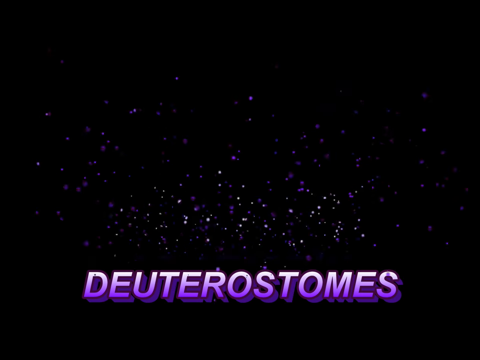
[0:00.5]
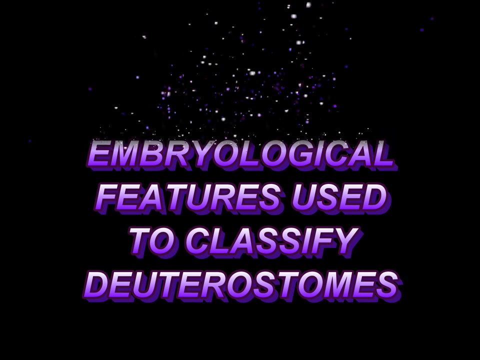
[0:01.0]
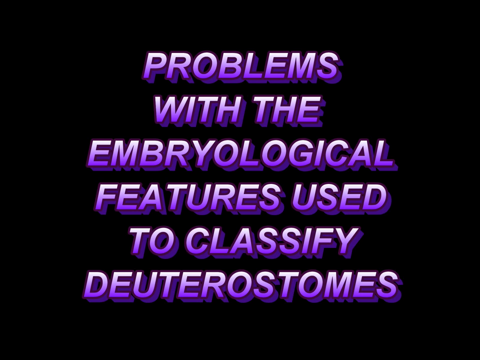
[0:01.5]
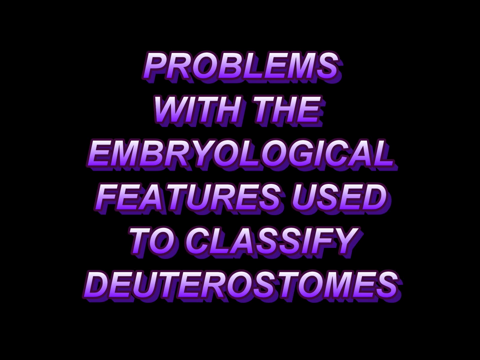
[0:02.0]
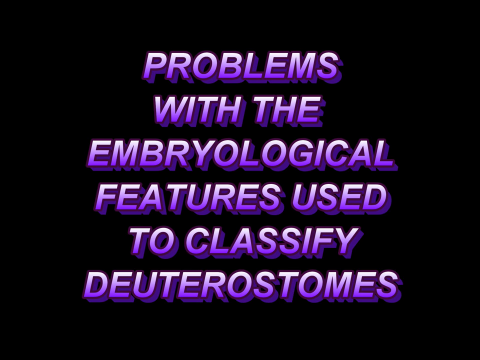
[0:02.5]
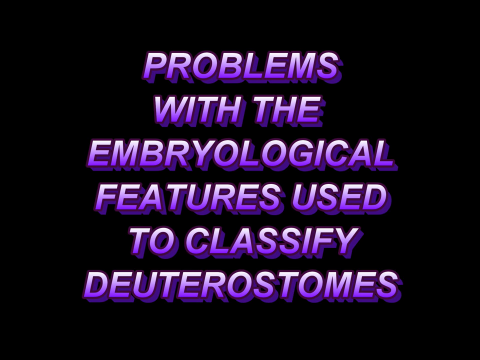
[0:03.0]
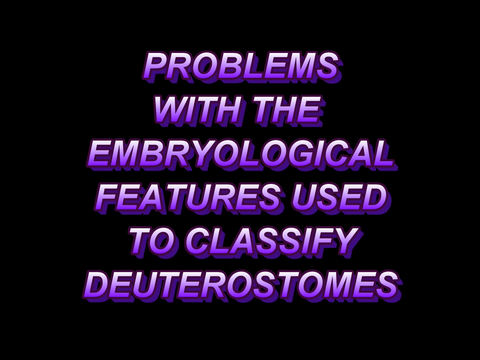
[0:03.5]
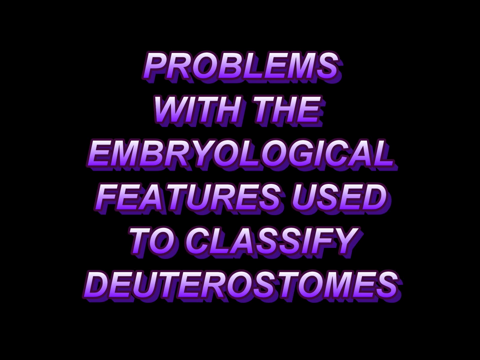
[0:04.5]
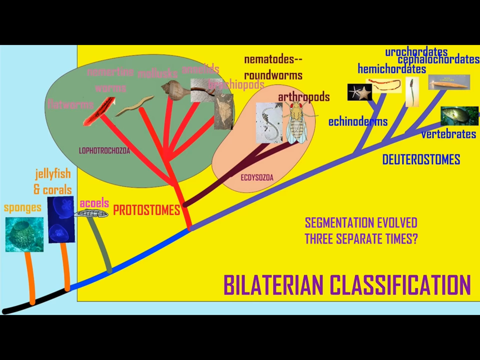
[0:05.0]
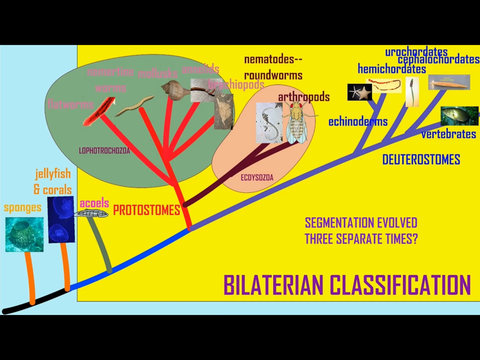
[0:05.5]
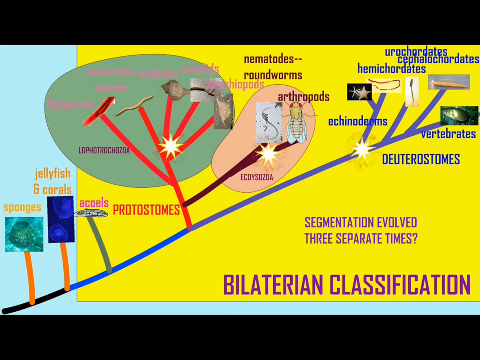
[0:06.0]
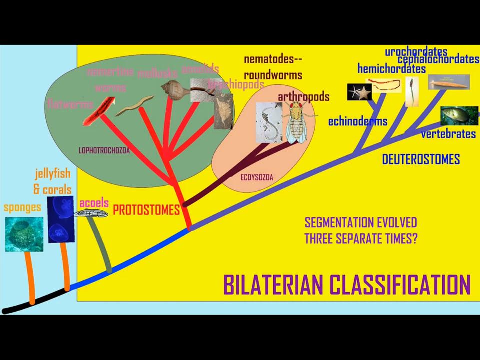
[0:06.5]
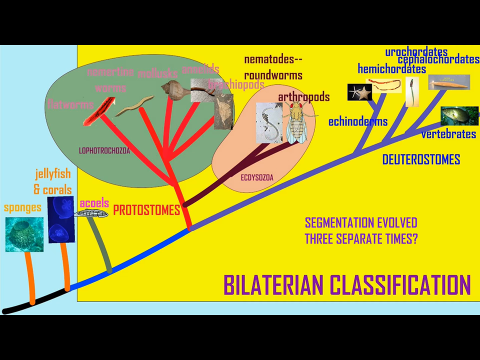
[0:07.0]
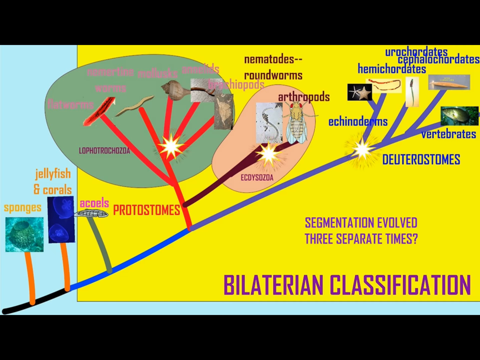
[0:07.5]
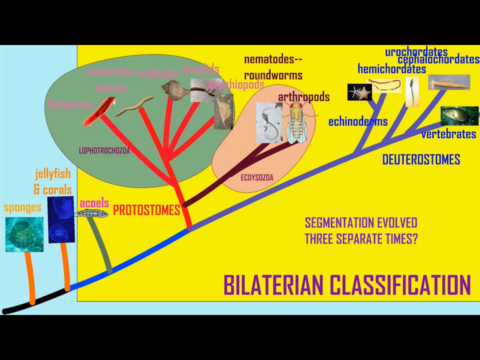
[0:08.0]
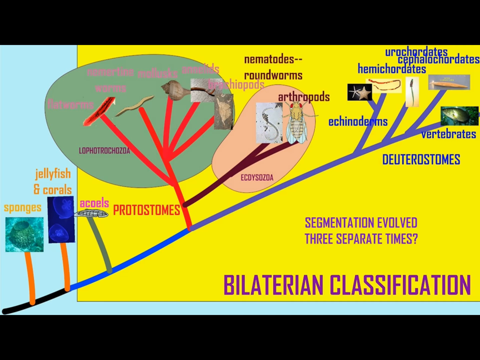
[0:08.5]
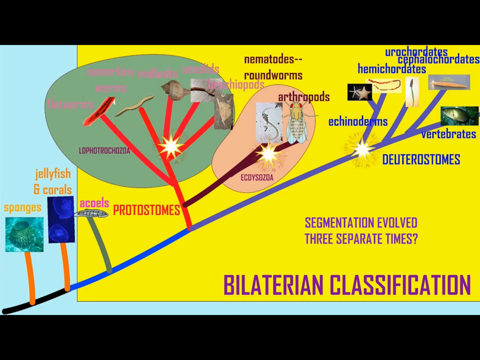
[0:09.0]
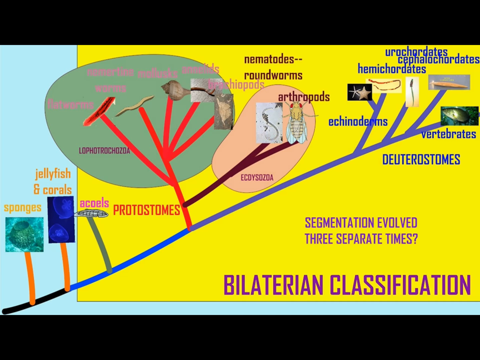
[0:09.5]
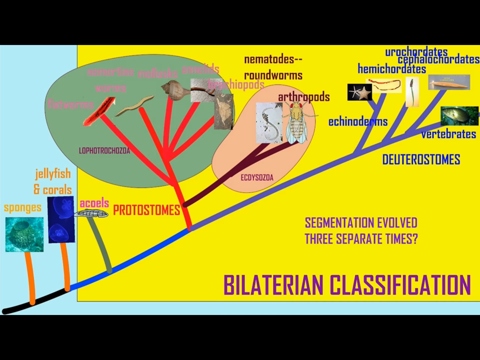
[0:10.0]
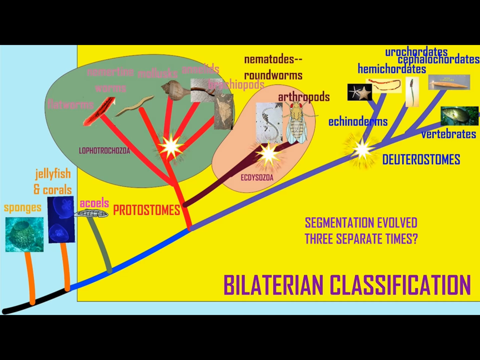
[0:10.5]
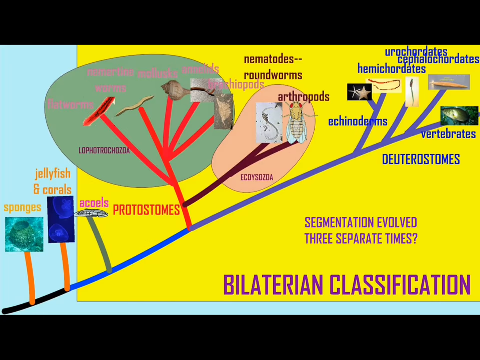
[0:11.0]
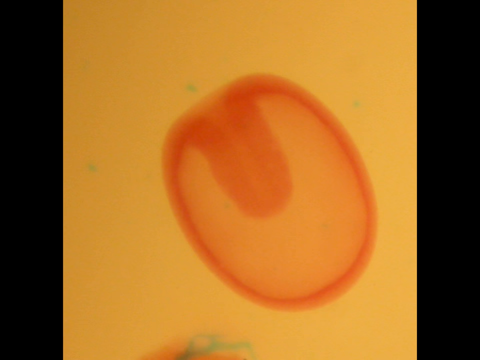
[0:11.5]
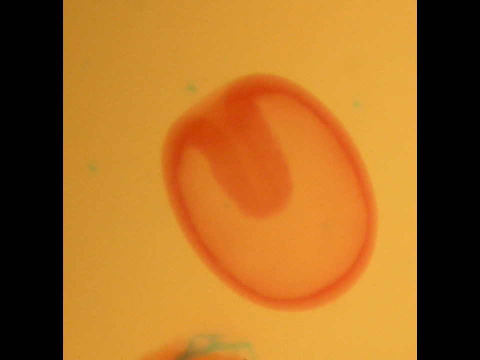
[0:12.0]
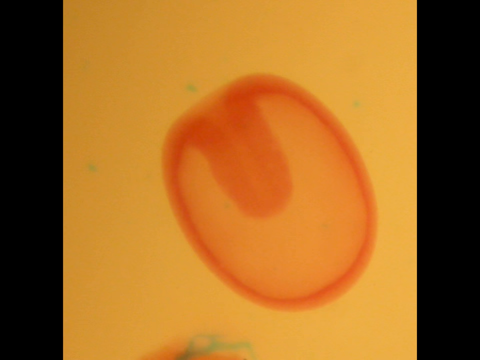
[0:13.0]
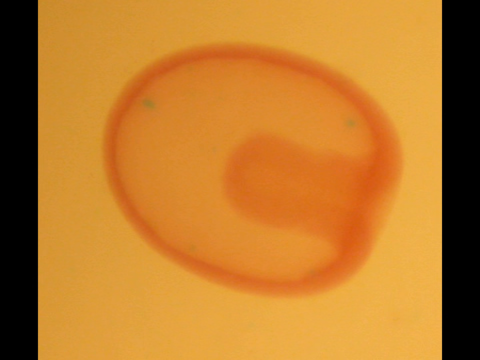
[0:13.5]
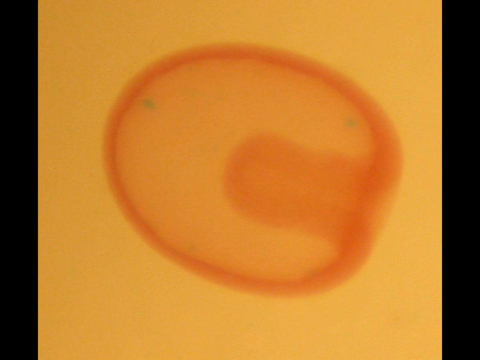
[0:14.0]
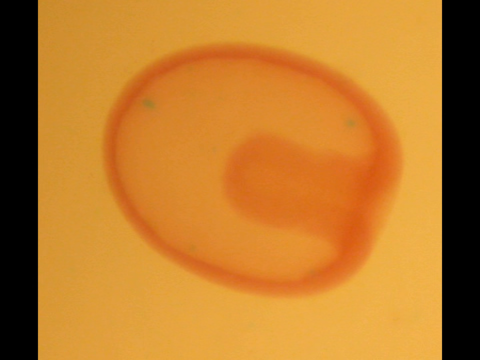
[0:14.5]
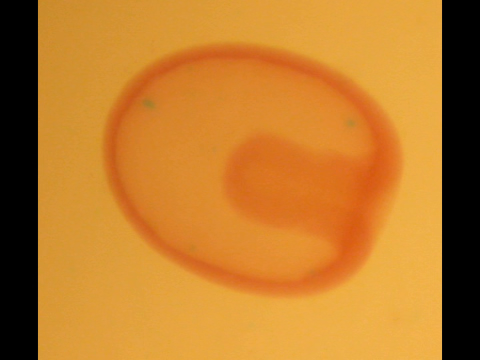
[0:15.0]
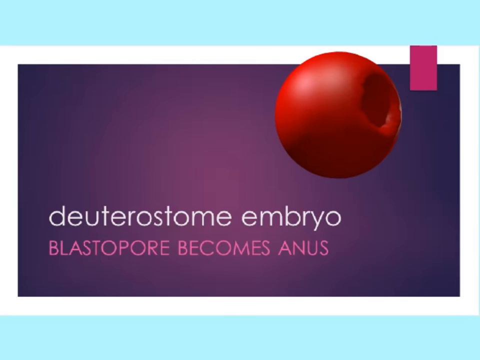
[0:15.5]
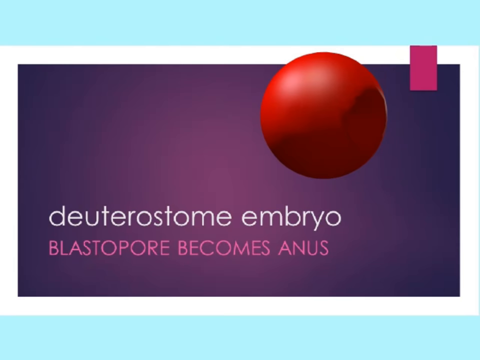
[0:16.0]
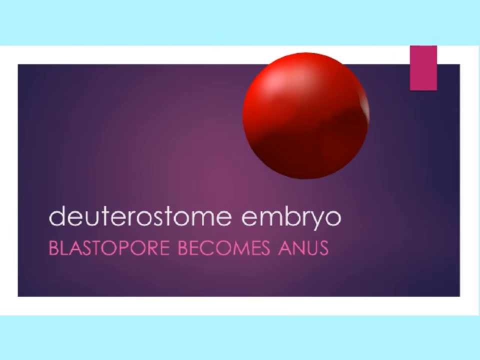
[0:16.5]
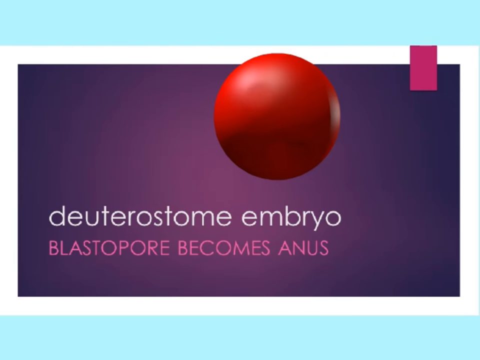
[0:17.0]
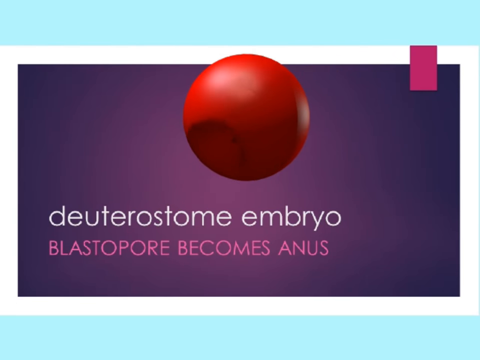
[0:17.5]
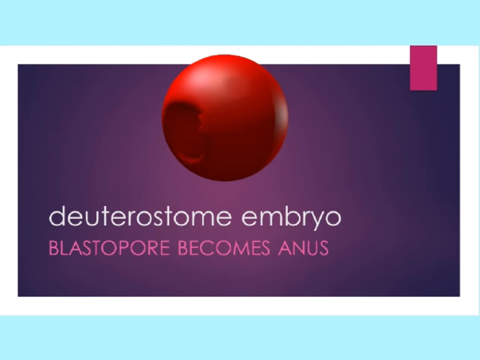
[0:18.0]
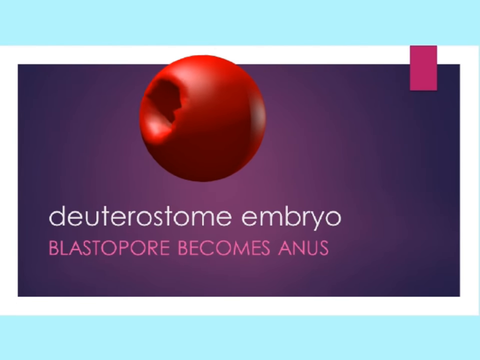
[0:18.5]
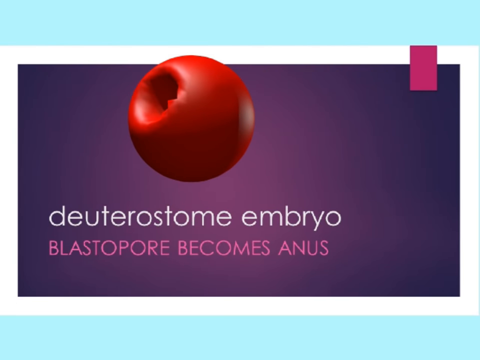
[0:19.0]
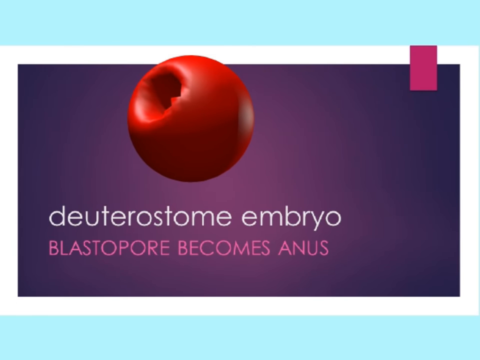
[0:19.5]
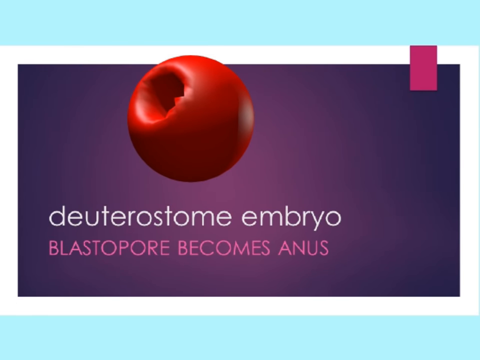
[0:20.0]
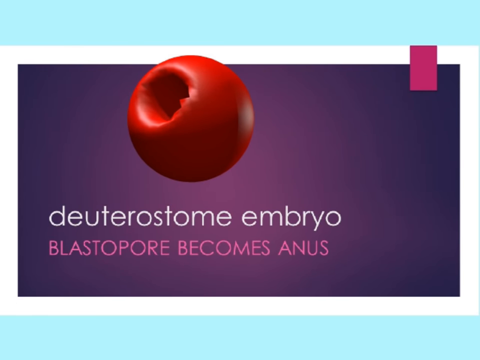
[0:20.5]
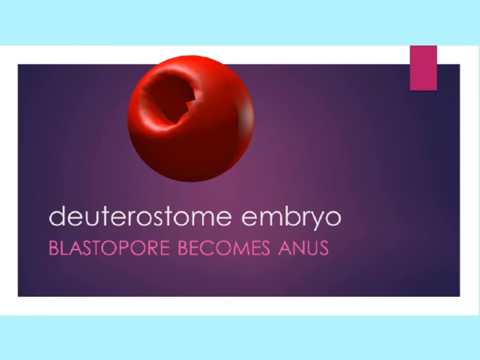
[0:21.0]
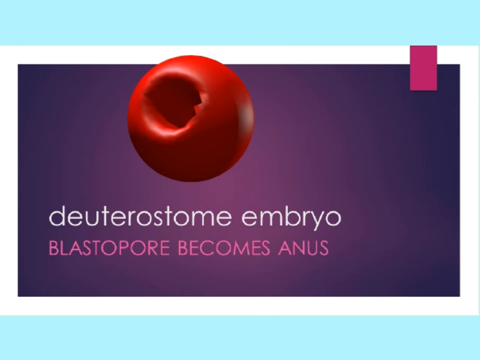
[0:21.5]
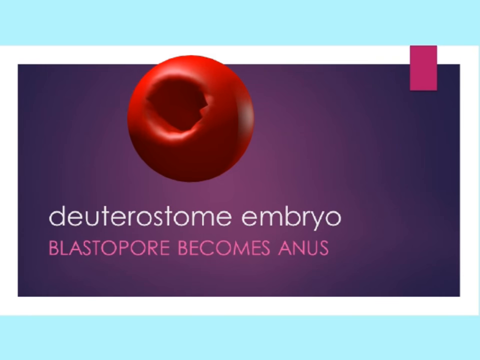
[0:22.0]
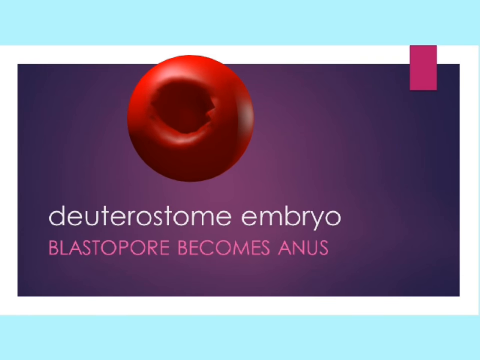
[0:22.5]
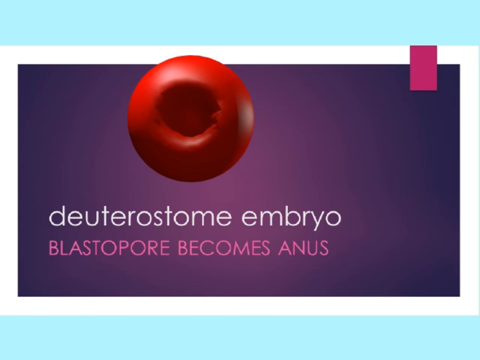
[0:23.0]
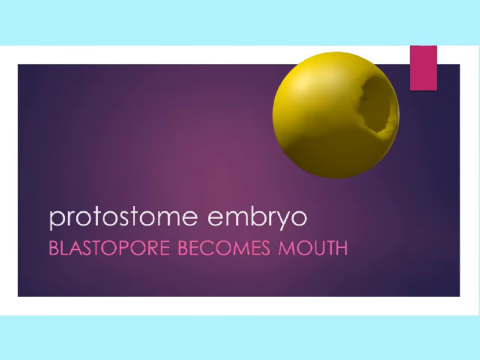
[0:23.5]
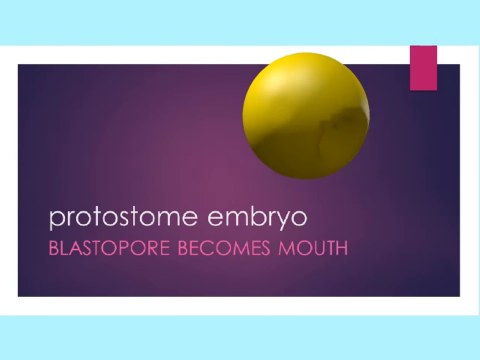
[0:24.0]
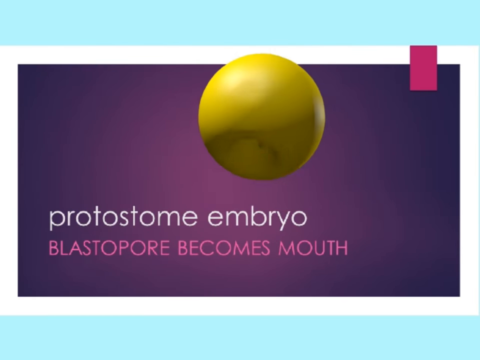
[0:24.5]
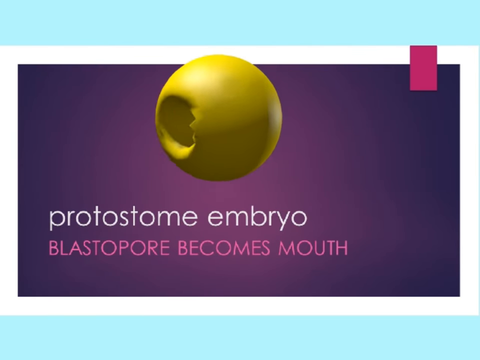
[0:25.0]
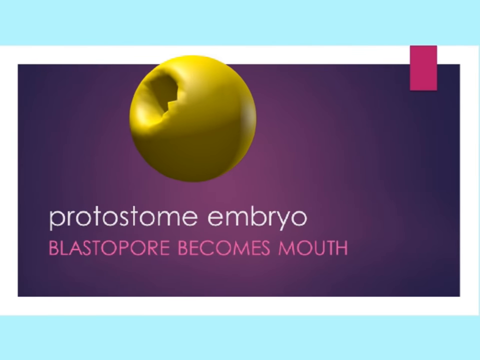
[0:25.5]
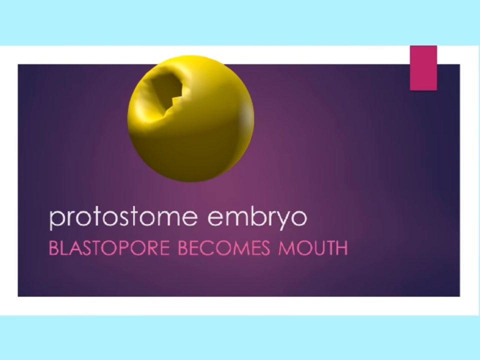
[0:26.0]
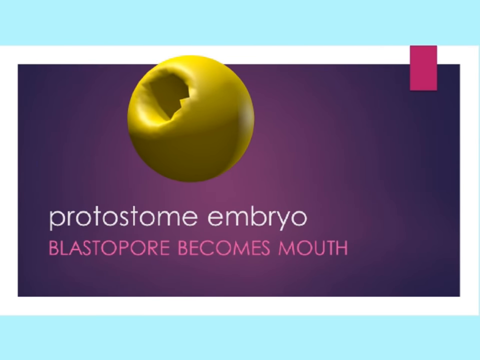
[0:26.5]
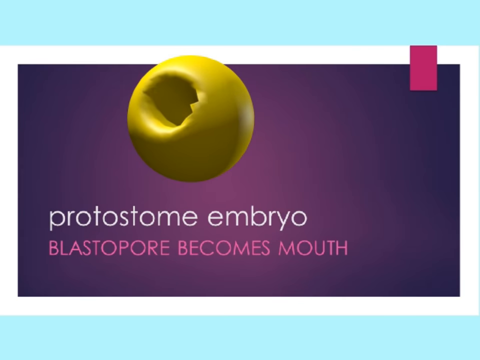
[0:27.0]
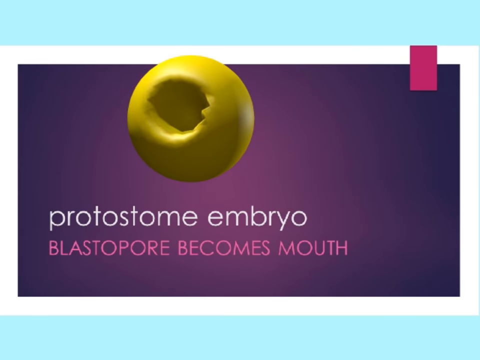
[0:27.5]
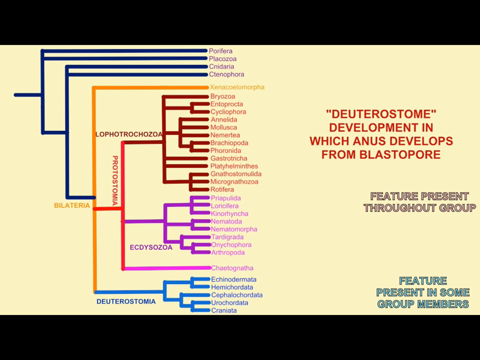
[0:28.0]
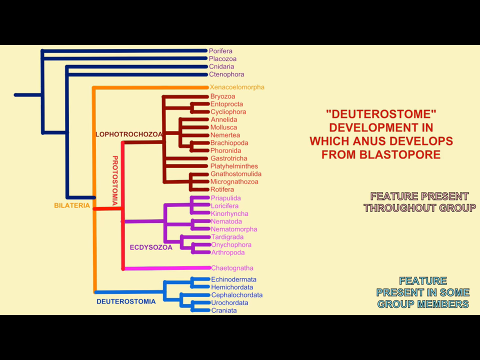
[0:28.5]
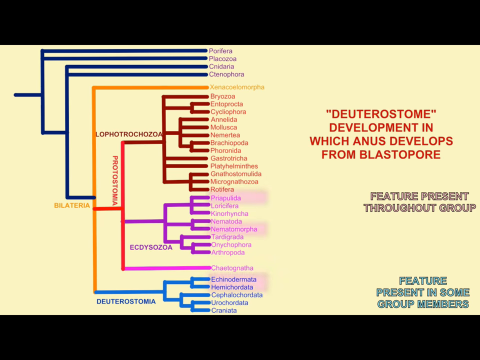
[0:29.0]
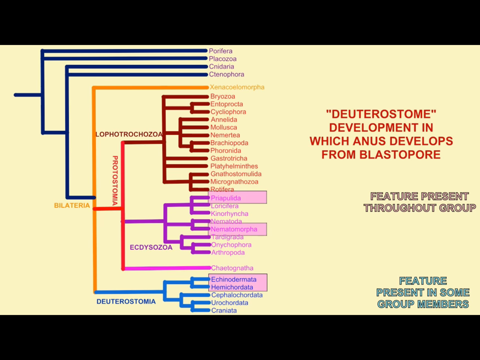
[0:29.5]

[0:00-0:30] The video starts with a black screen, then a mass of white glitter comes in from the top of the screen. The glitter forms words stacked from the bottom of the screen to the top: at the bottom is "deuterostomes" in purple letters, above that "declassified", above that "features used", above that "embryological", above that "with the", and above that "problems". All the words are in purple letters that are sort of white on top. The scene then switches to a depiction of what seems to be some sort of organs. There is a blue square with a yellow square inside it, and a line runs from the bottom left of the blue square toward the top right of the yellow square. Lines stick out from this line with pictures on them, mostly looking like pictures of organs or something, and they are labeled. The one at the bottom left says "sponges", the one to its right says "jellyfish and corals", the next to the right says "O-C-A-C-O-E-L-S", and there is another label to the right of that. At the bottom right of the yellow square it reads "bilateral classifications". Next comes a blurry image of what looks like a cell on a peach background, surrounded in red, with a dark orange center, followed by another image of it. Then a purple screen appears with a red ball on the right side, spinning and moving toward the left side of the screen. Text on the screen says "DEUTEROSTOME embryo", and below that "blastophore becomes anus". As the ball spins, a hole in its left side is shown; the hole turns toward the camera and the ball disappears. A yellow ball appears and makes the same motion. Then a chart on a white background is shown.